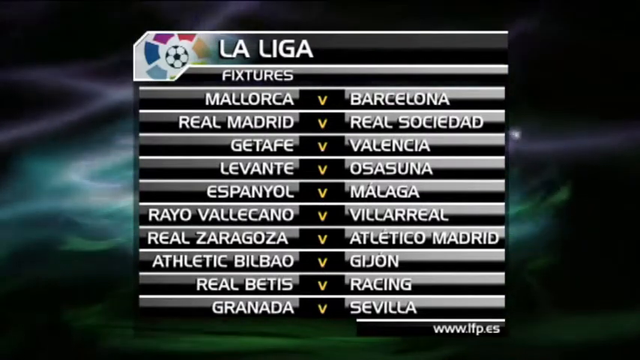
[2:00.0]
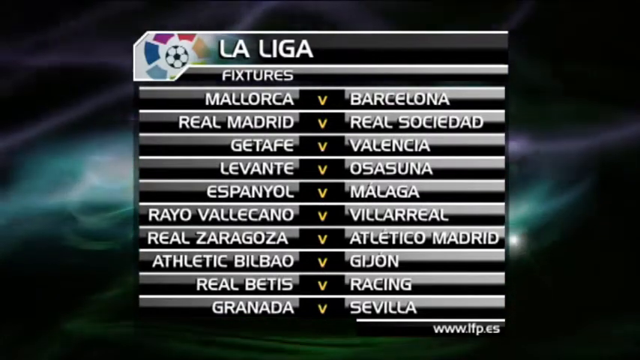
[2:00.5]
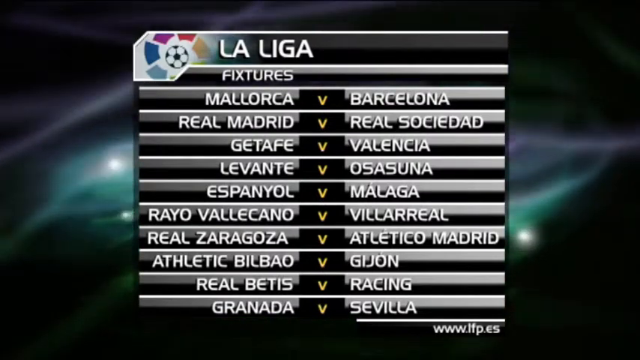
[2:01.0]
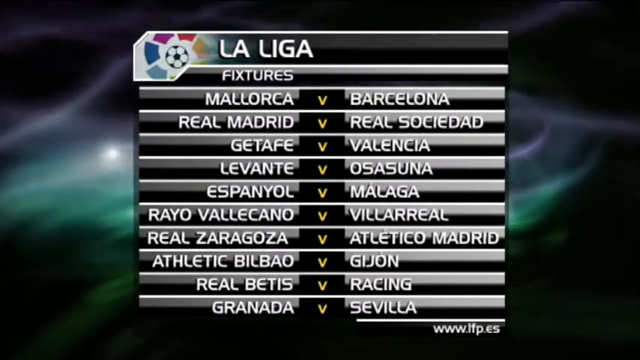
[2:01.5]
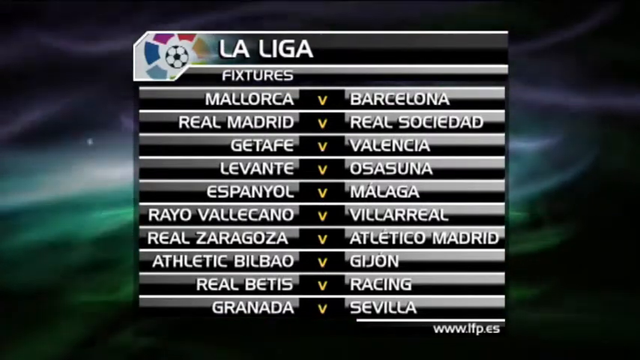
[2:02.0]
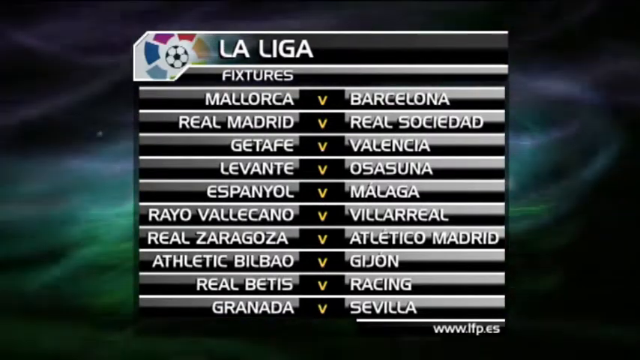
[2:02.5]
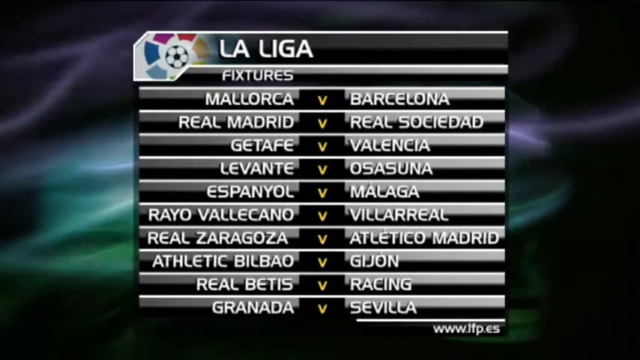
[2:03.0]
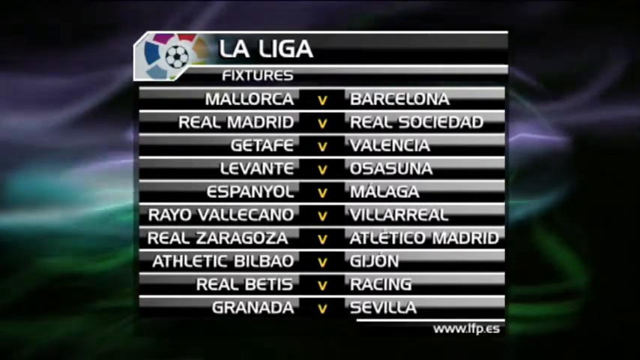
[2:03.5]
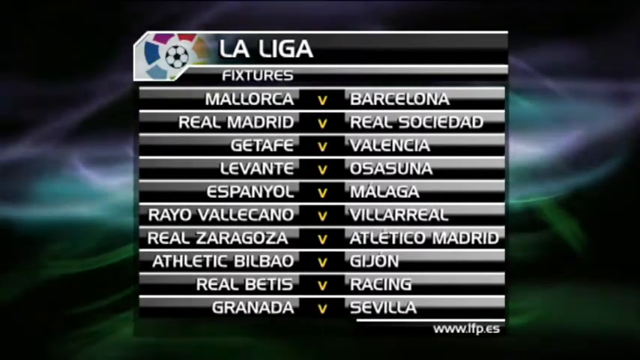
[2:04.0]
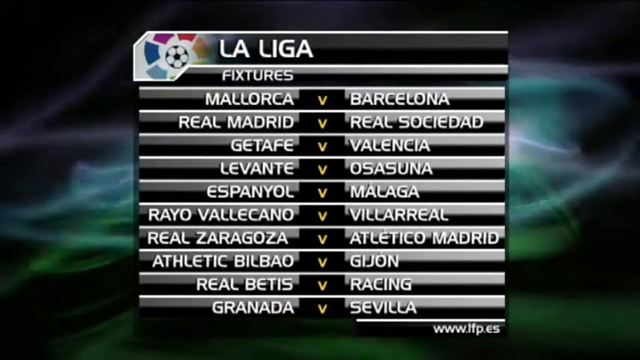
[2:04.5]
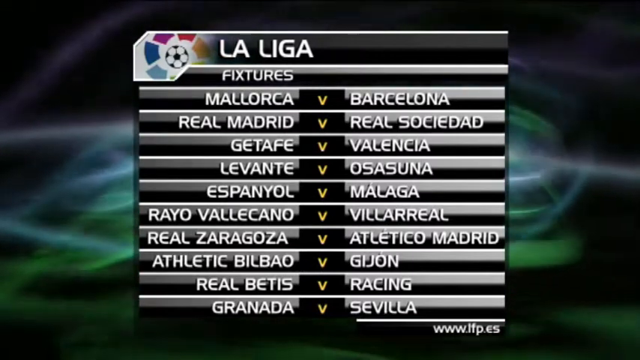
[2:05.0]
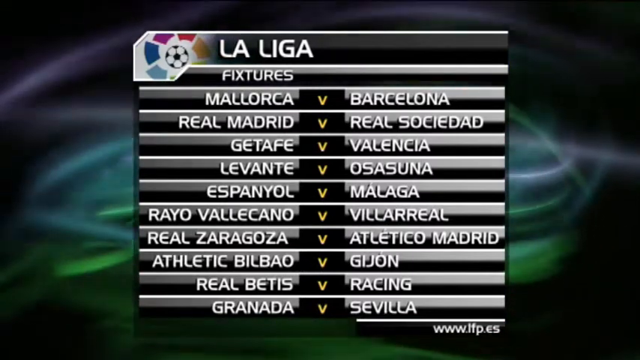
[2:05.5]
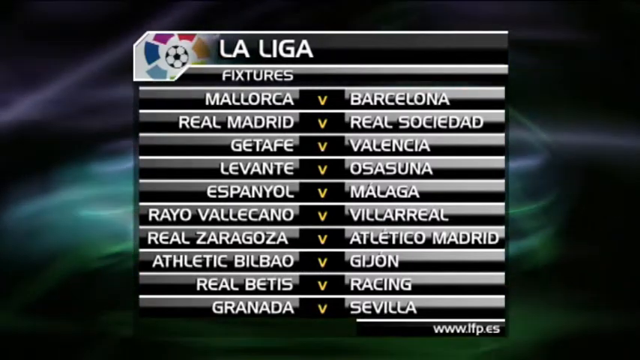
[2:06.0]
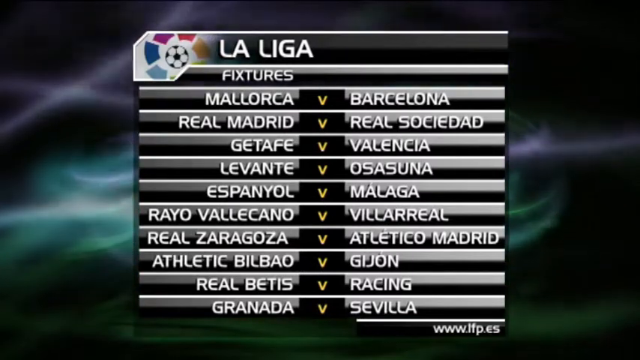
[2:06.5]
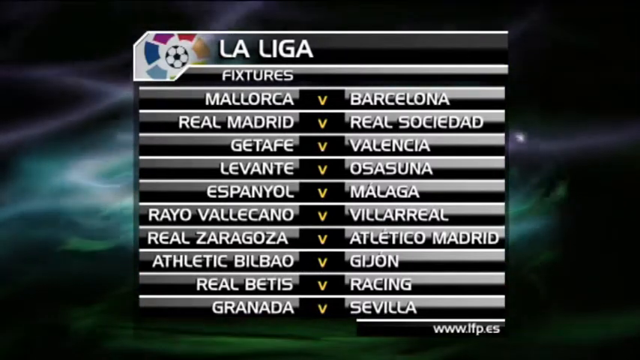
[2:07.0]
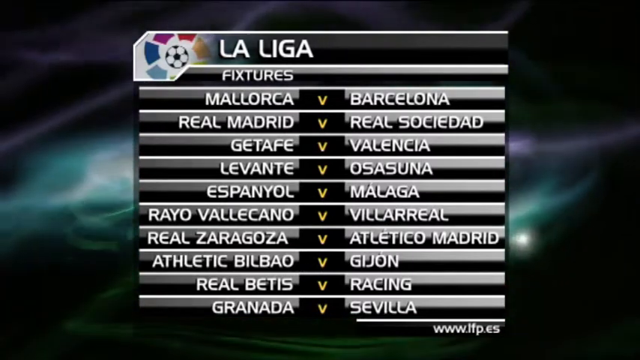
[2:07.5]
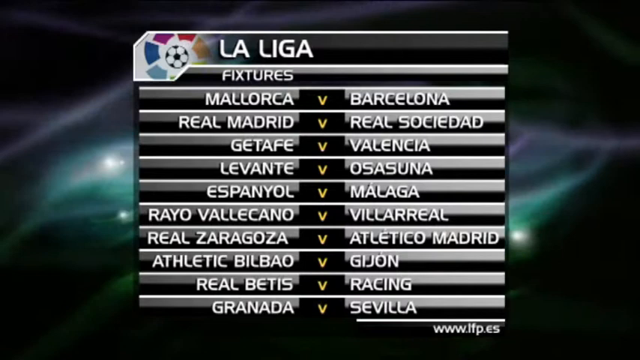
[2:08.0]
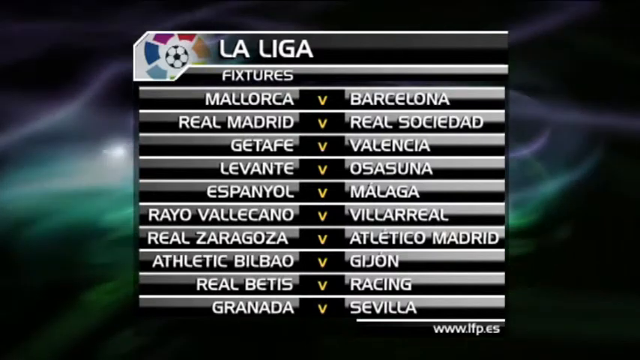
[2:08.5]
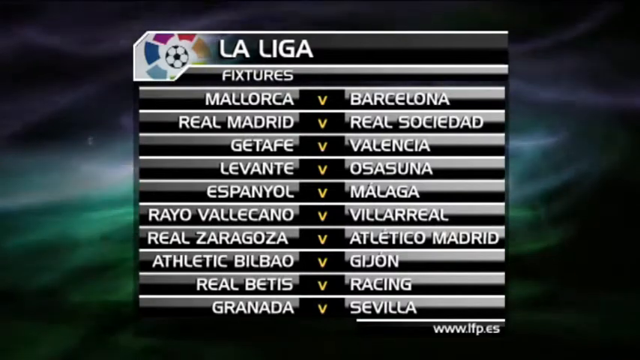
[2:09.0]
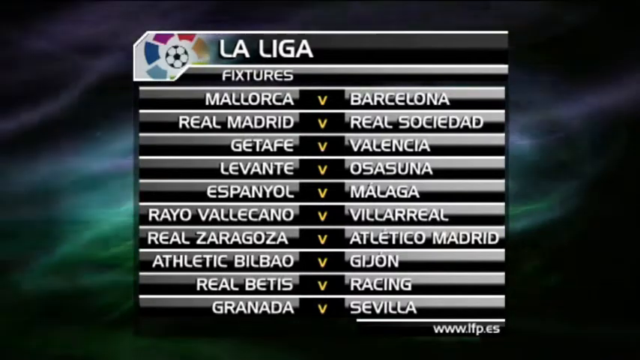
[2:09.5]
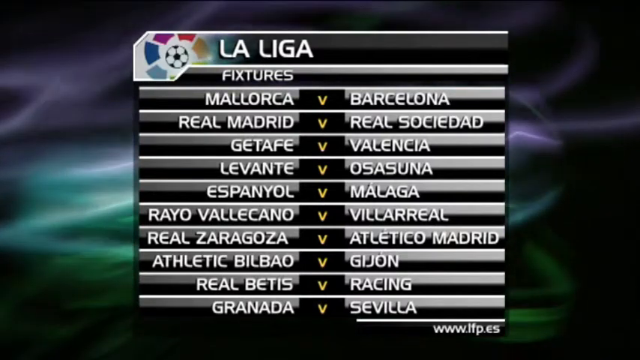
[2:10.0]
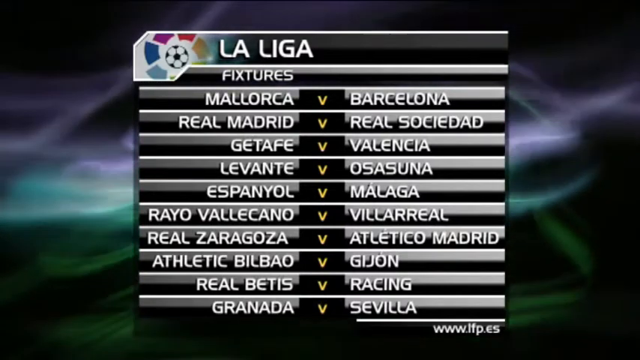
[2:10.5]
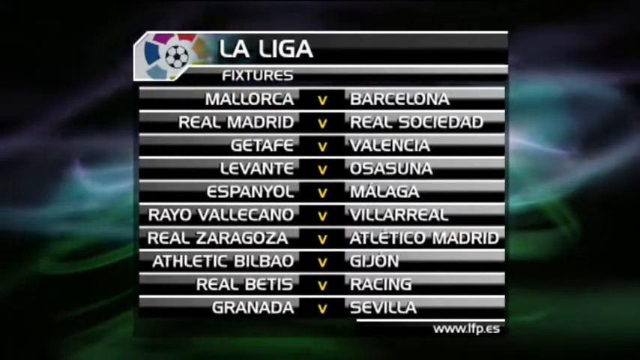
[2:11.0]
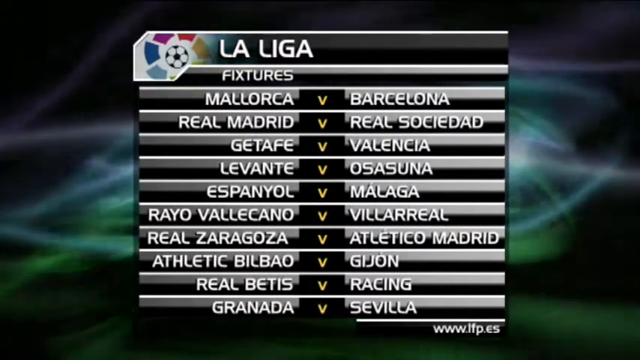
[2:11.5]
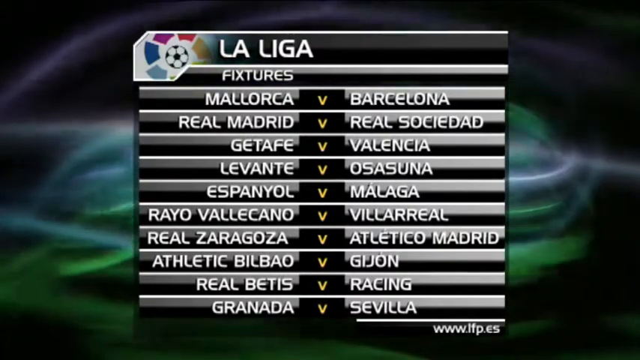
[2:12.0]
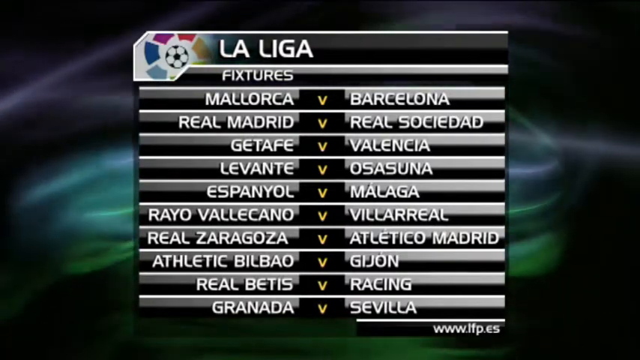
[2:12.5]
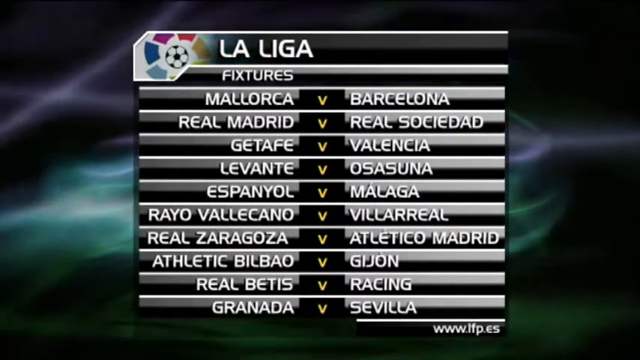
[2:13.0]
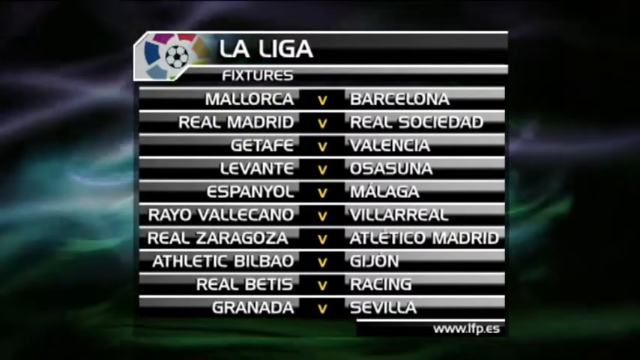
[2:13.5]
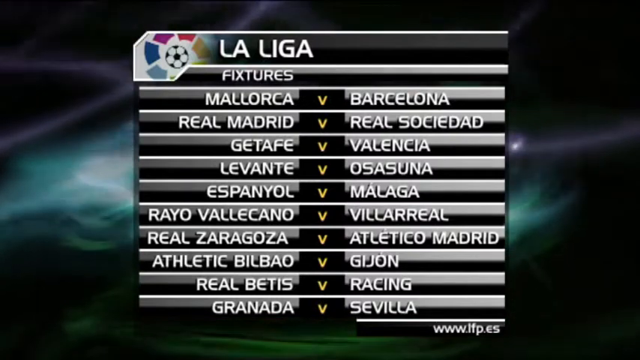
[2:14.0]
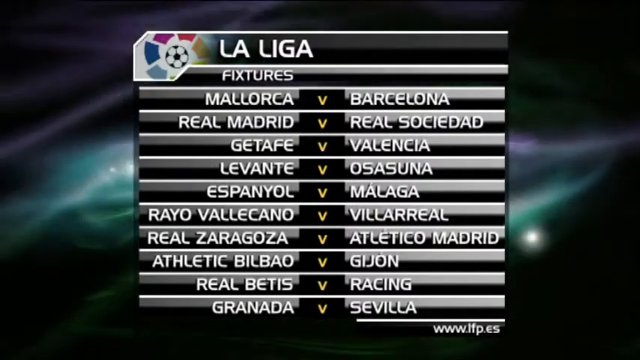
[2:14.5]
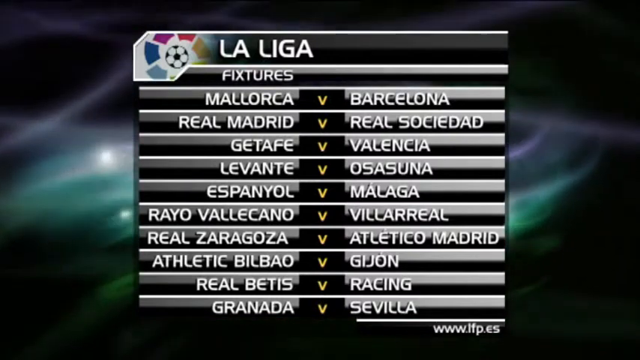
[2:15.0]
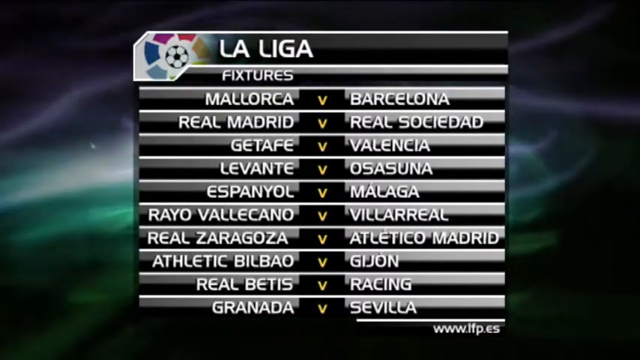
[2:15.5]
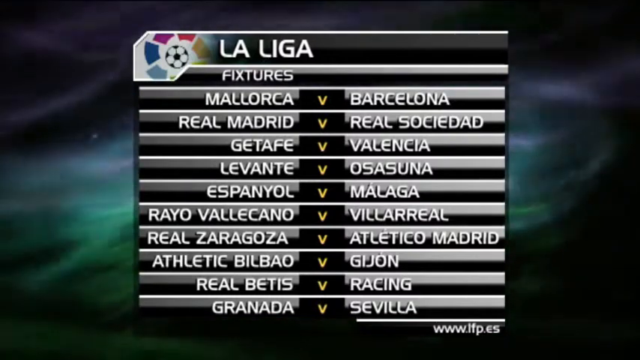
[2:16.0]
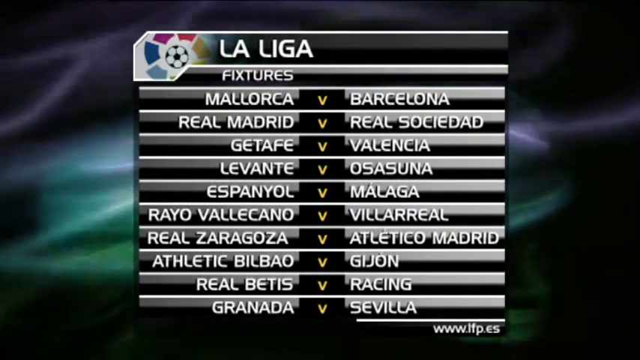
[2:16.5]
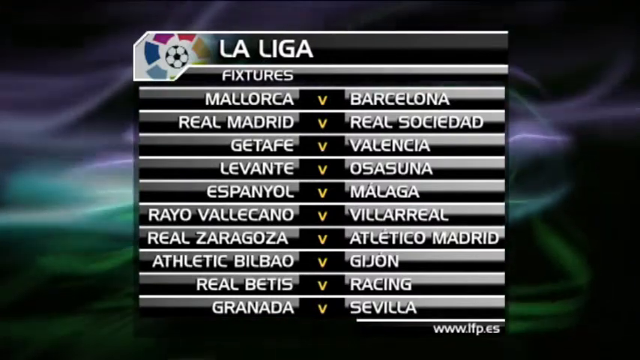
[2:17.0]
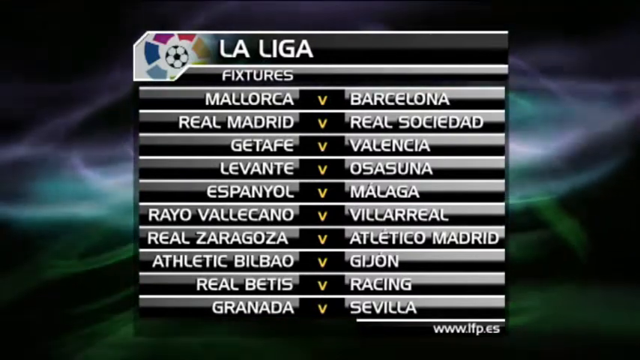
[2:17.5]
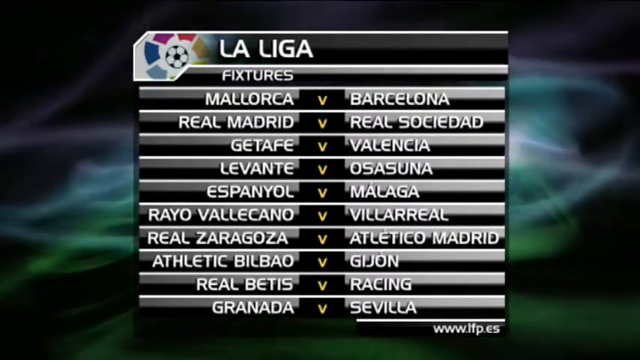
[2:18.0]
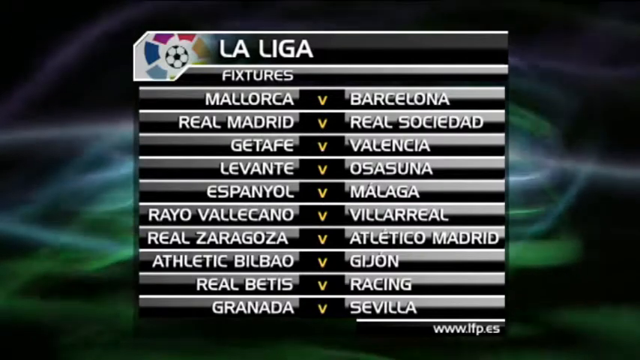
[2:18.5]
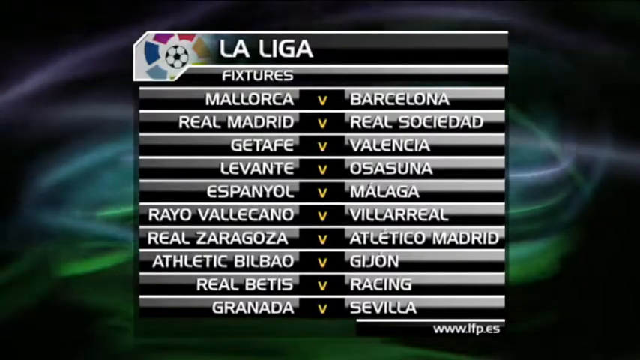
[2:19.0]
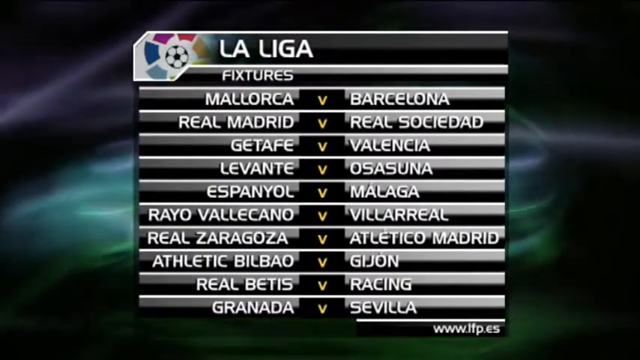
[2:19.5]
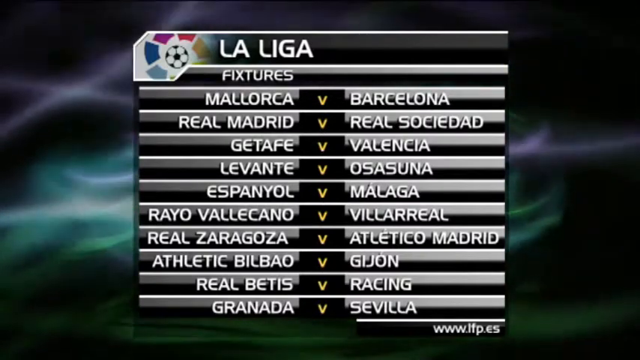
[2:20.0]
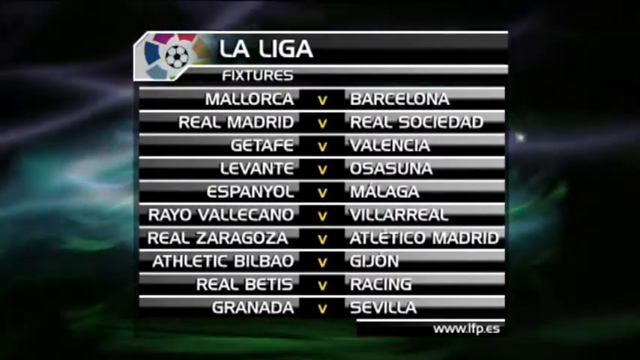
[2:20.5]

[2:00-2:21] The full-screen La Liga graphic has a sort of textured background with purple, green and bluish hues, kind of illuminated against a mostly black background. The title is "La Liga", and to its left is a logo with a soccer ball in the middle encircled by purple, red, orange, yellow, green and two shades of blue. The subtitle is "Fixtures", and it lists a number of upcoming games, apparently in the Spanish Premier League, in all caps against a gray and black background with a yellow V between each pair of opponents: "Mallorca v Barcelona", "Real Madrid v Real Sociedad", "Getafe v Valencia", "Levante v Osasuna", "Espanyol v Malaga", "Raya Vallecano v Villarreal", "Real Zaragoza v Atlético Madrid", "Athletic Bilbao v Gijon", "Real Betis v Racing" and "Granada v Sevilla". In the bottom right is the URL "www.lfp.es". The background colors keep moving in a smoky, sort of mysterious pattern beneath the overlaid games.